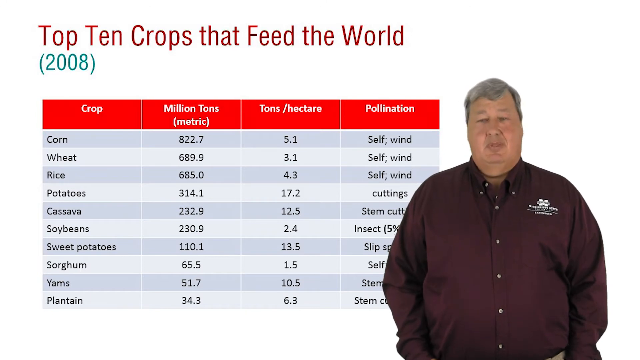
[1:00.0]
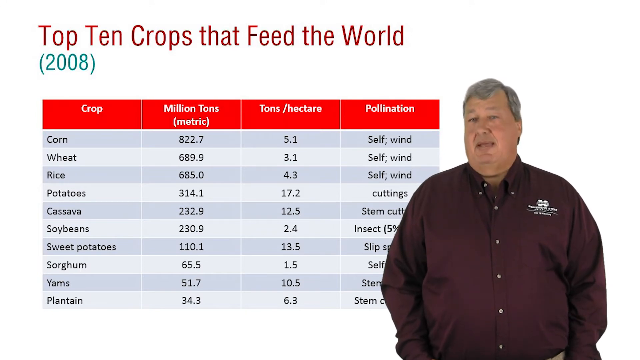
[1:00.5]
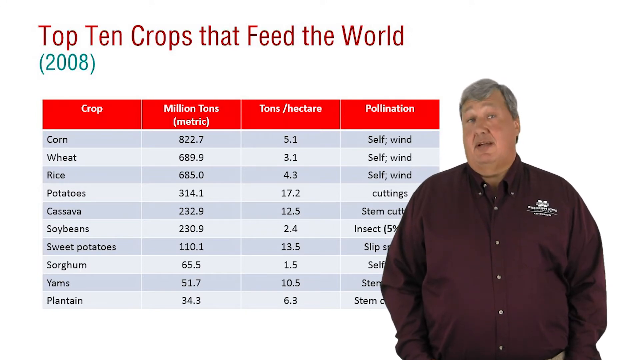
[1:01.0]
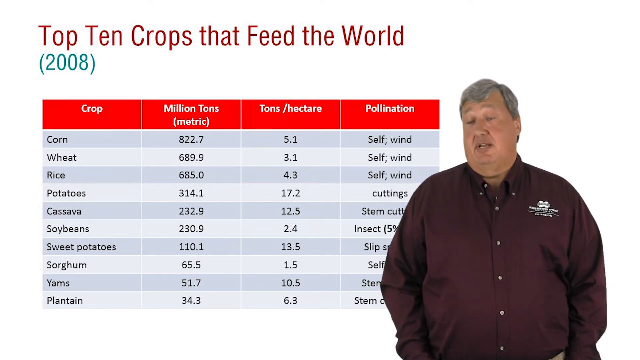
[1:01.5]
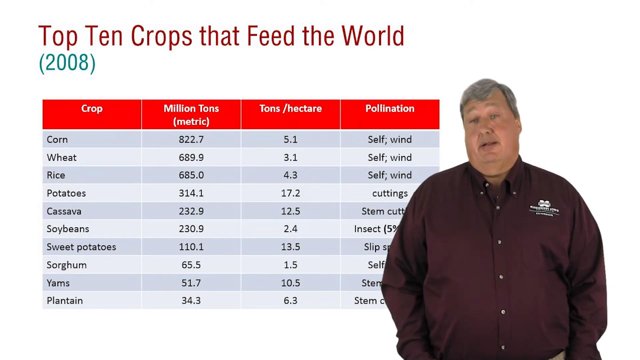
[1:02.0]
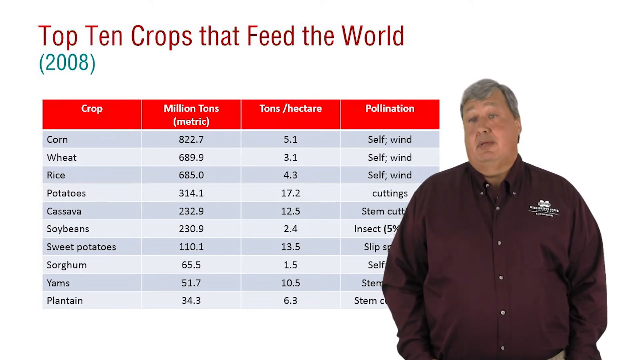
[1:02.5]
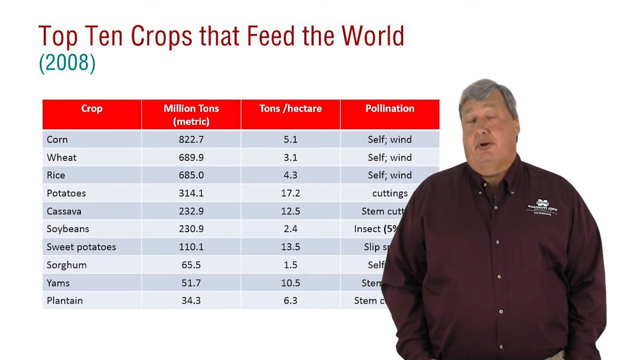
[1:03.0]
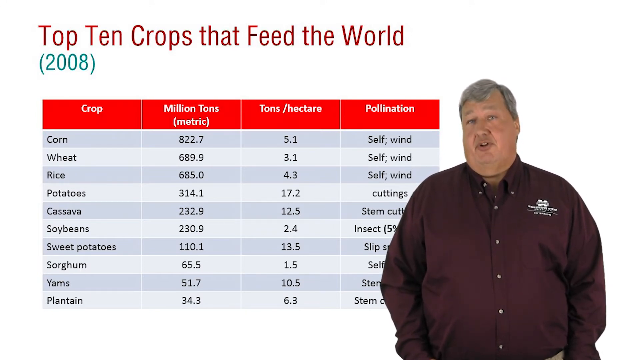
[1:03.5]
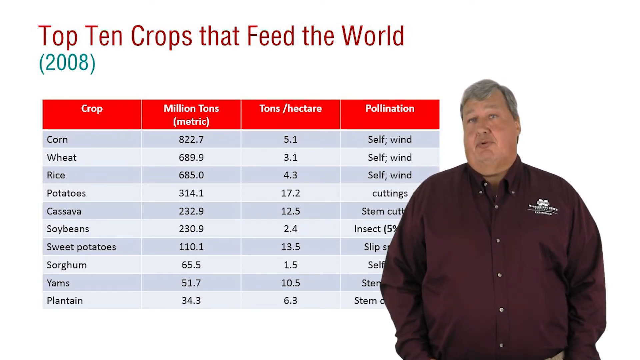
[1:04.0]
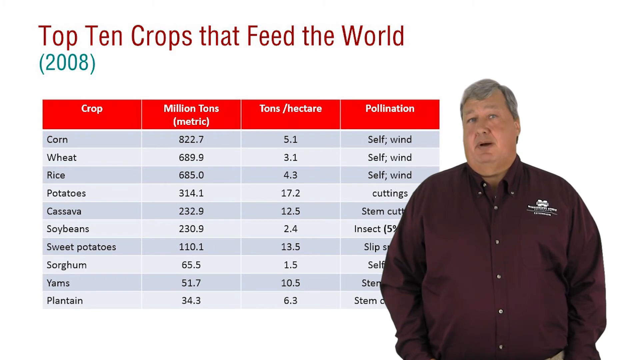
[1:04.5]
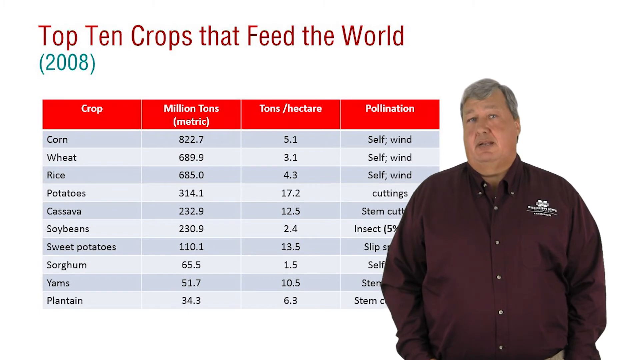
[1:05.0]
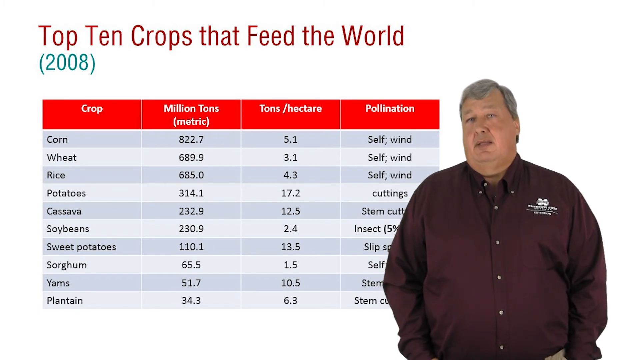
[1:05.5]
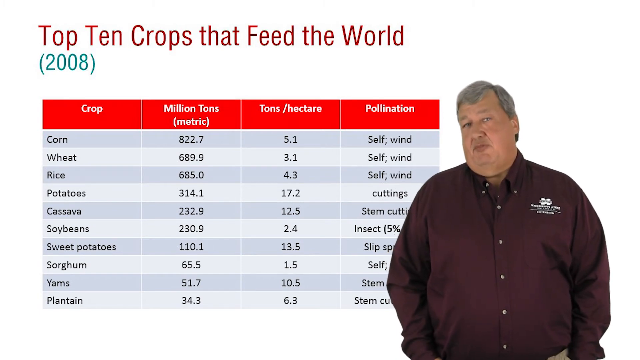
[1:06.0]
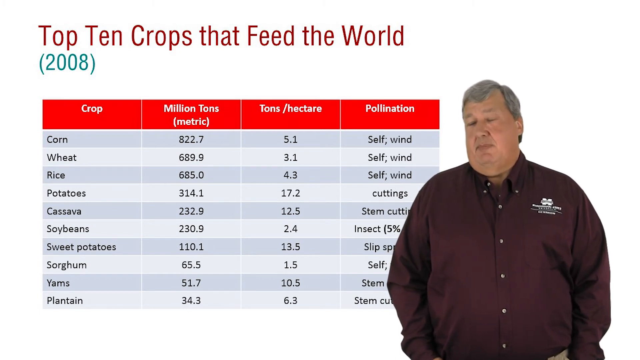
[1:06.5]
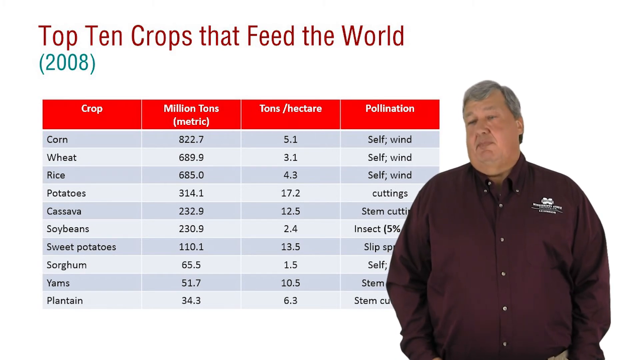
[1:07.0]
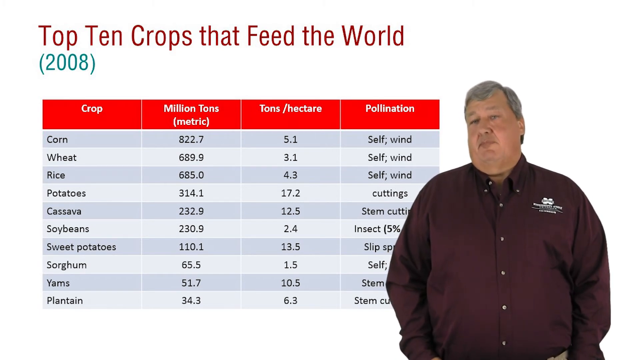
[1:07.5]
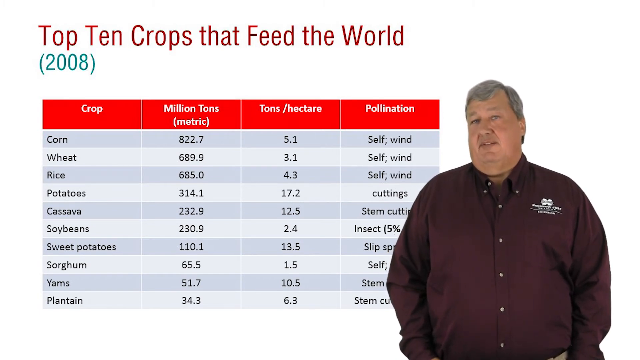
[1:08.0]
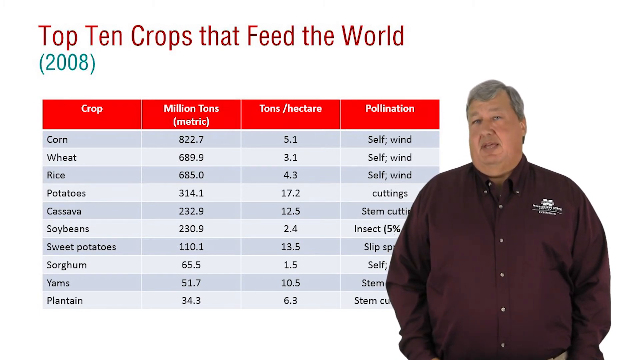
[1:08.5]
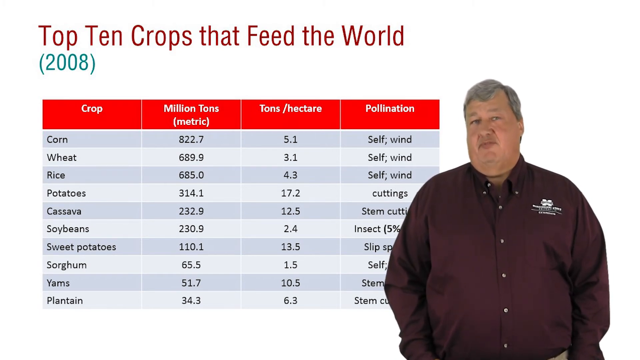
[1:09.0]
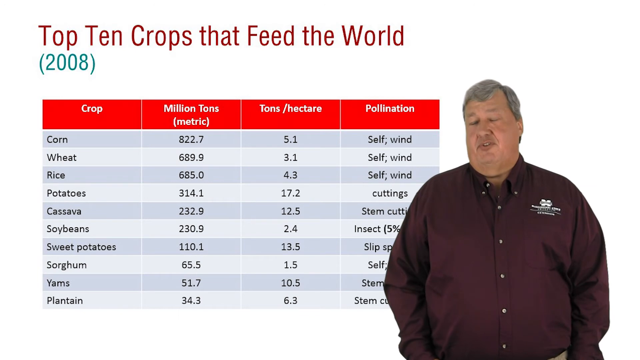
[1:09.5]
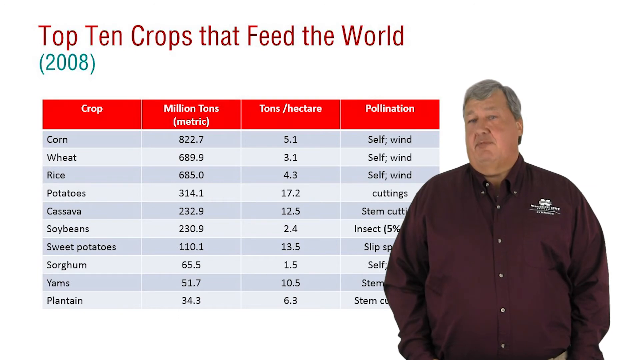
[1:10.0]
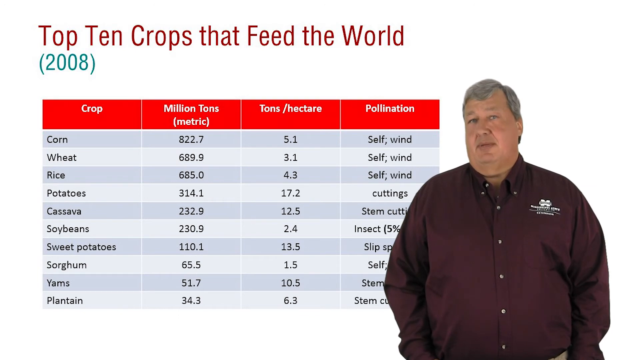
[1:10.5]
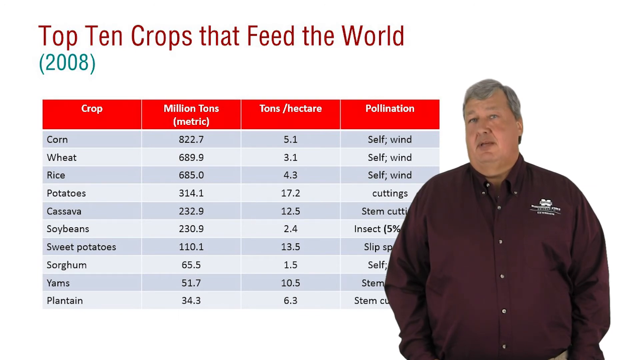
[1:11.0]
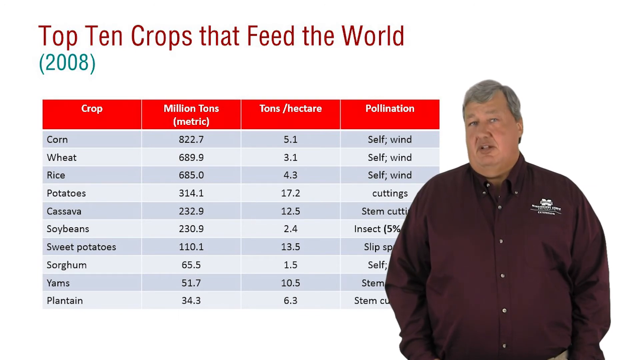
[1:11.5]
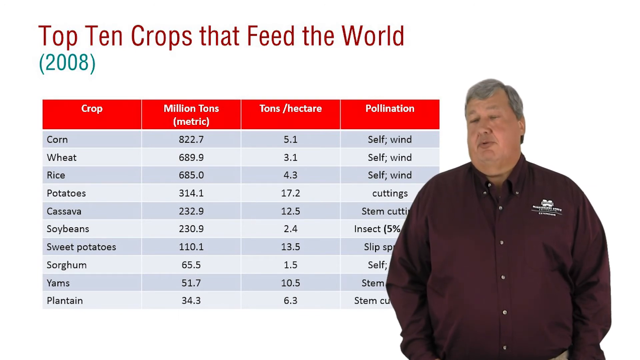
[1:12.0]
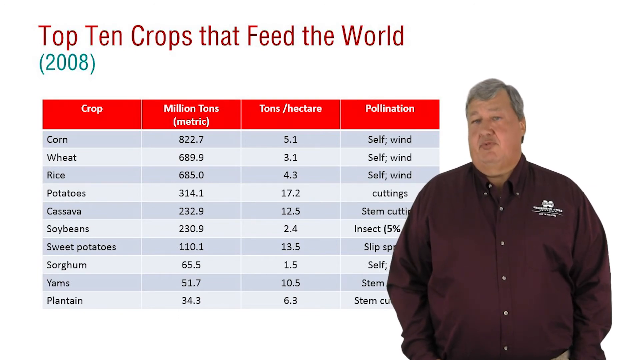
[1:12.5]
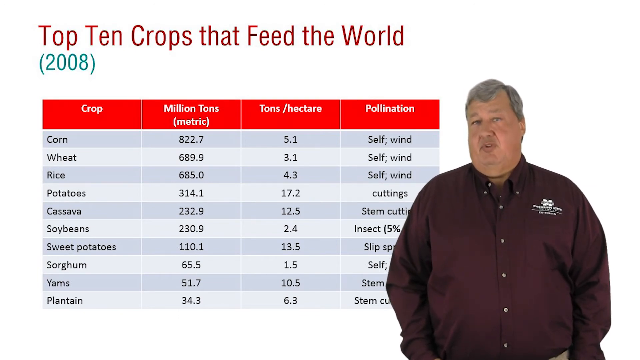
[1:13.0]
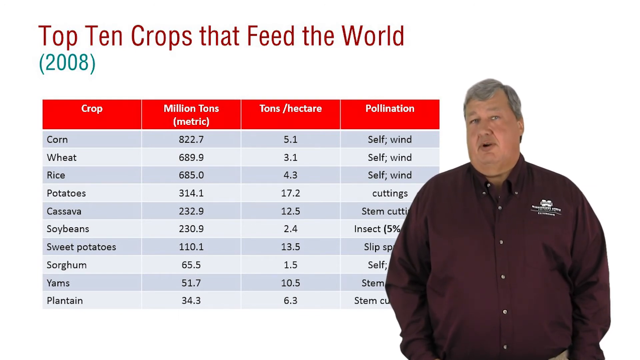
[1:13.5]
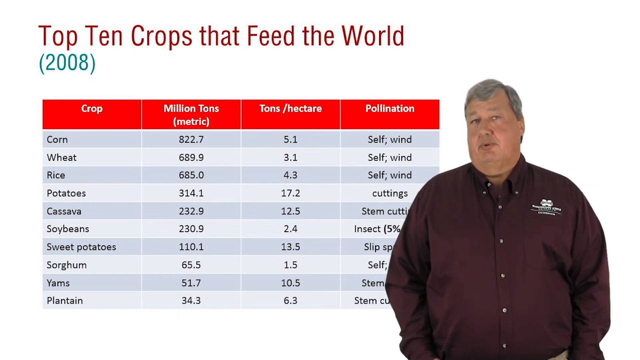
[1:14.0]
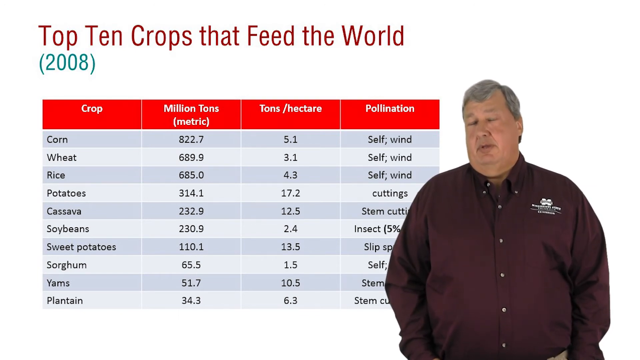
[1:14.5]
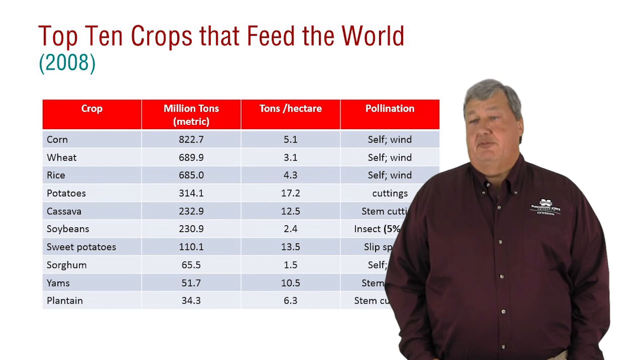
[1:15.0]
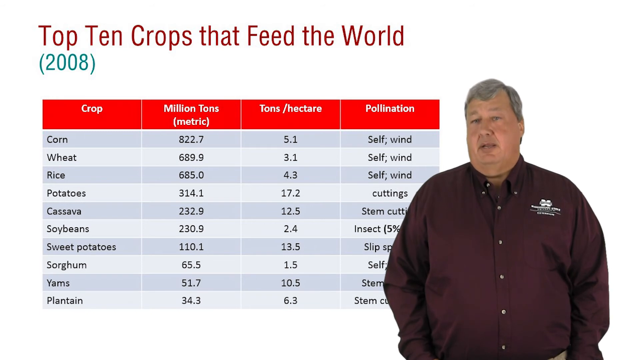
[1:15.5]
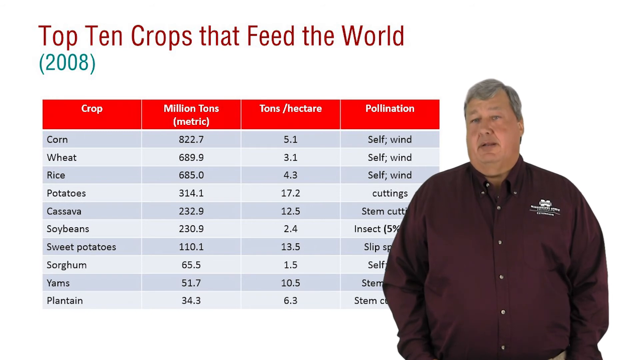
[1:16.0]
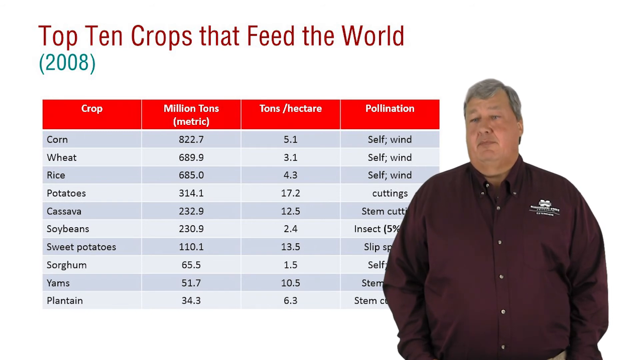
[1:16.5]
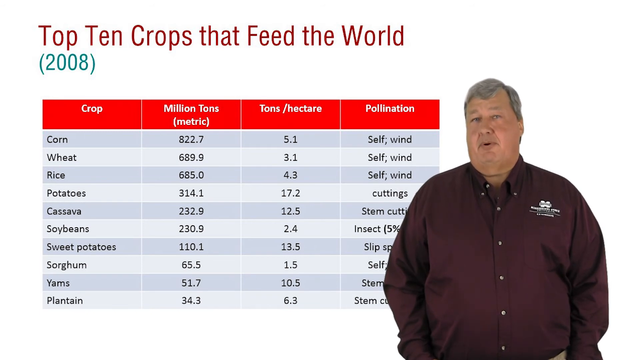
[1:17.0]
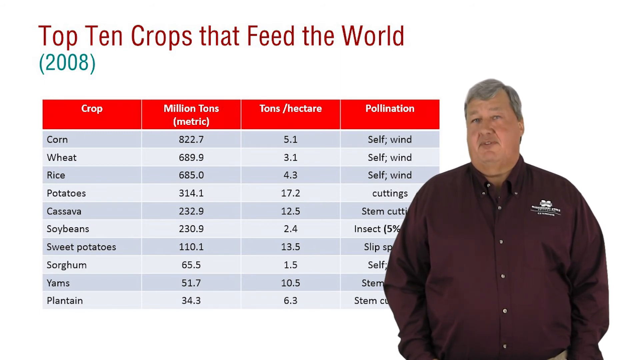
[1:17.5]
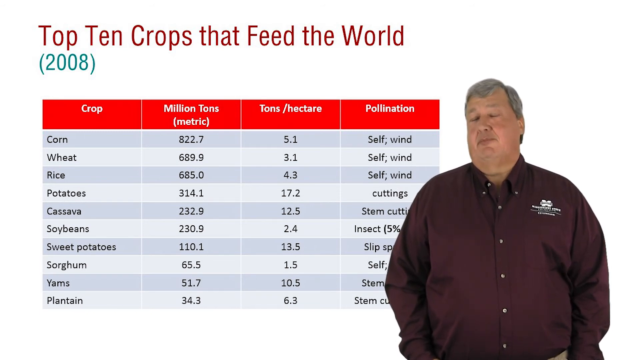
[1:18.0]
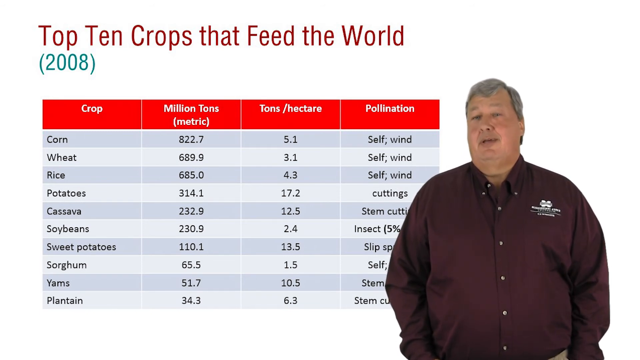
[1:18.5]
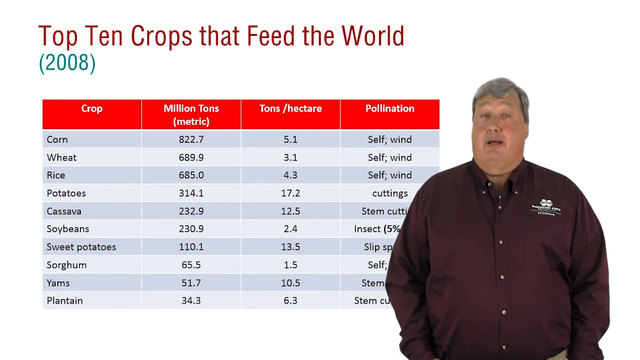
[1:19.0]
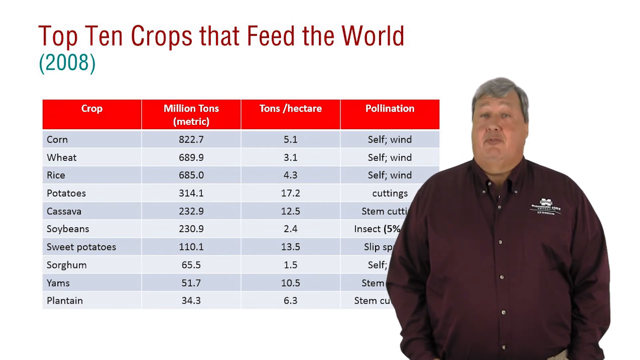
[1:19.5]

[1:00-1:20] The slide has a white background, with large brown letters at the top left reading "top 10 crops that feed the world." Below, in teal letters in parentheses, is "2008." Underneath is a chart with four columns whose heading labels, in red boxes, are "crop," "million tons," "tons/hectares," and "pollination." Below are alternating rows of gray and light gray, with crop names in the first column: corn, wheat, rice, potatoes, cassava, soybeans, sweet potatoes, sorghum, yams, and plantains. The other three columns give the measurements and pollination for all of the crops. On the right side of the screen, a man is seen from the waist up. He is a large man wearing a dark maroon button-up shirt with a white logo on his left chest; he looks to be about 50 years old, with dark gray hair, a cleanly shaved face, large cheeks and a large double chin. He speaks with his hands down by his side, as if giving the presentation for this slide.